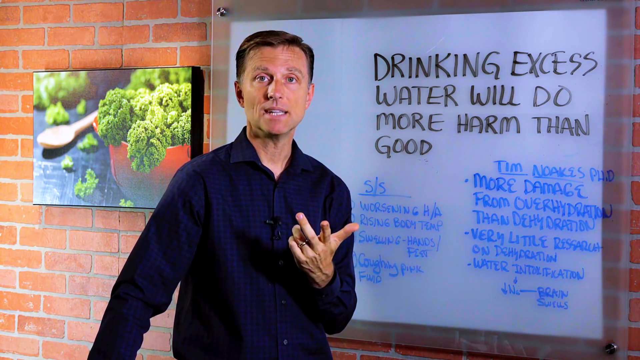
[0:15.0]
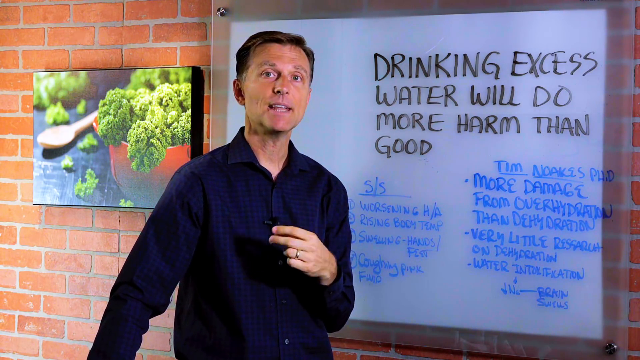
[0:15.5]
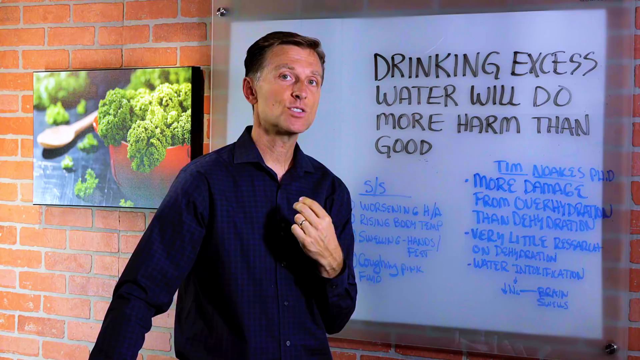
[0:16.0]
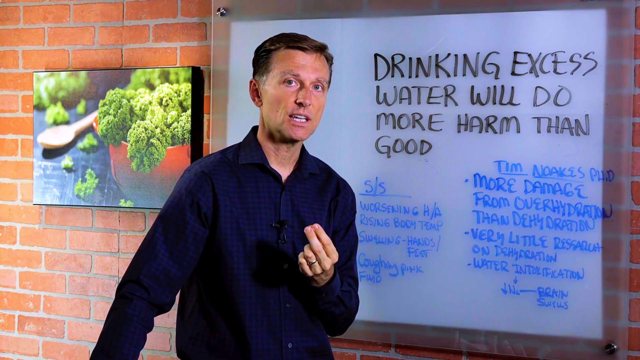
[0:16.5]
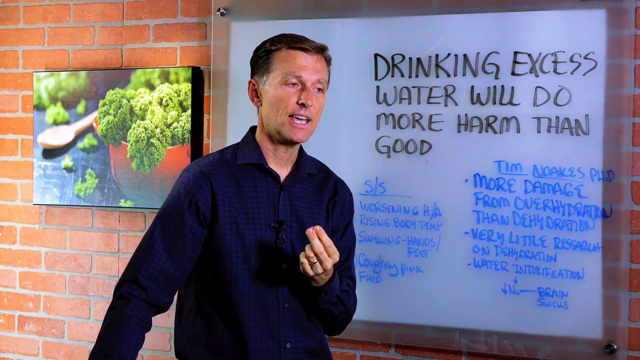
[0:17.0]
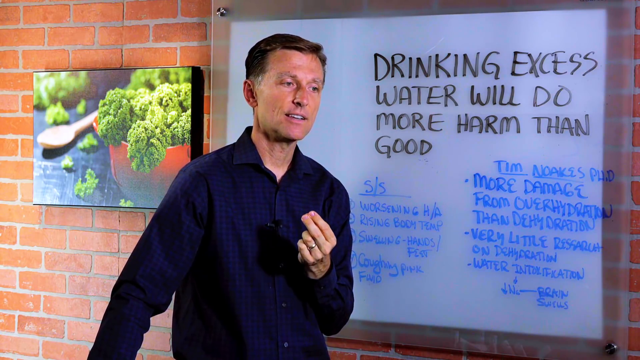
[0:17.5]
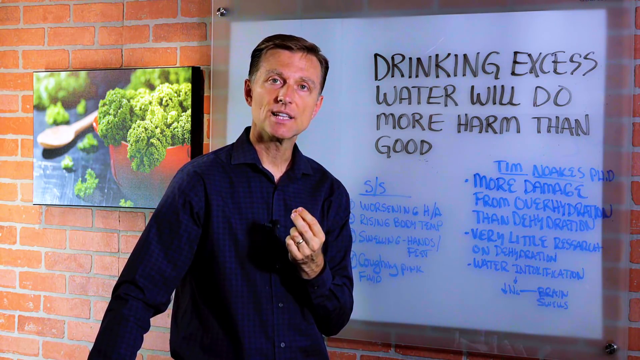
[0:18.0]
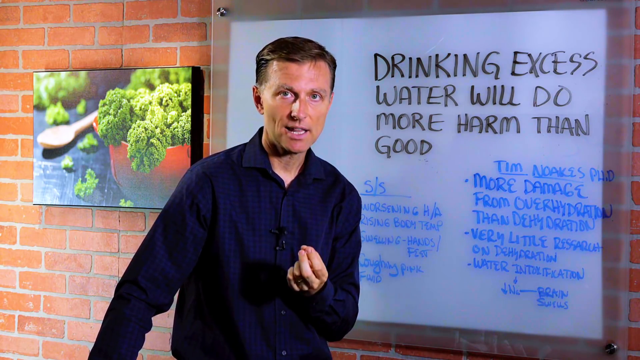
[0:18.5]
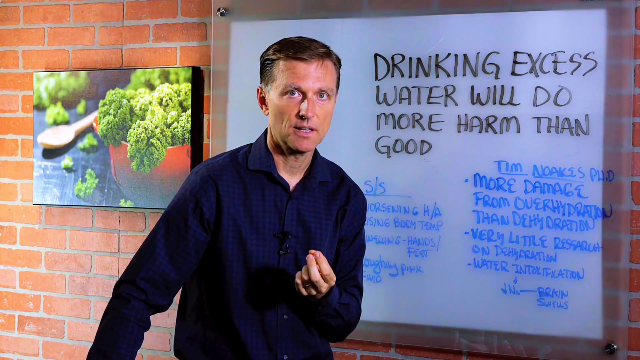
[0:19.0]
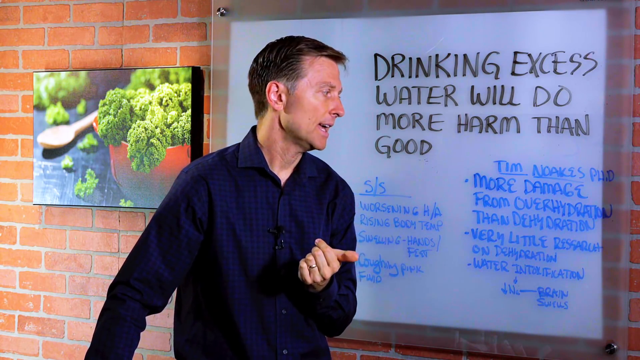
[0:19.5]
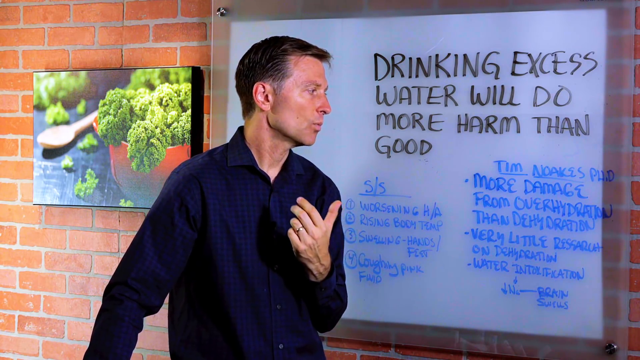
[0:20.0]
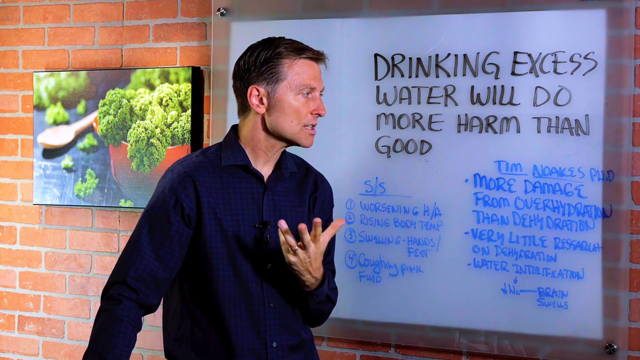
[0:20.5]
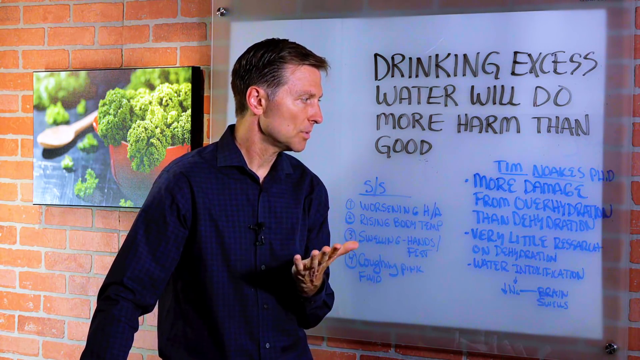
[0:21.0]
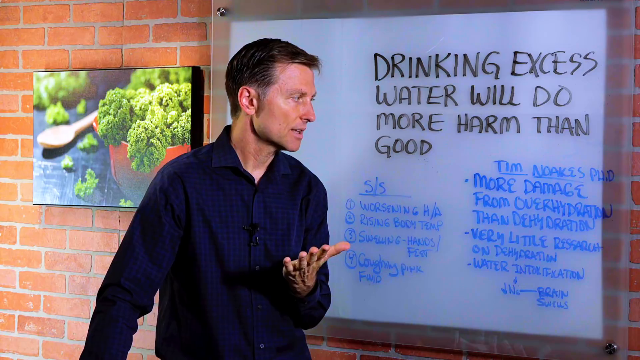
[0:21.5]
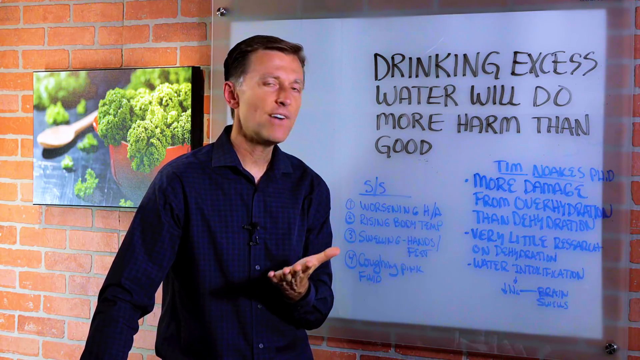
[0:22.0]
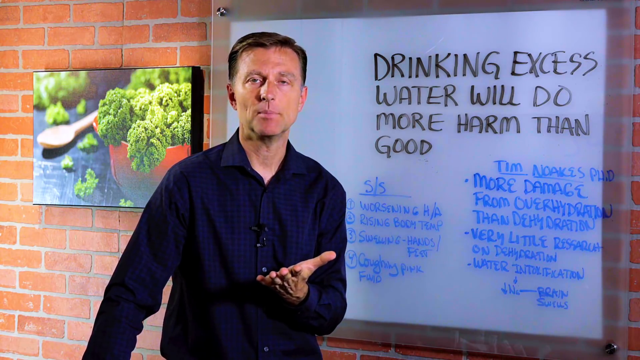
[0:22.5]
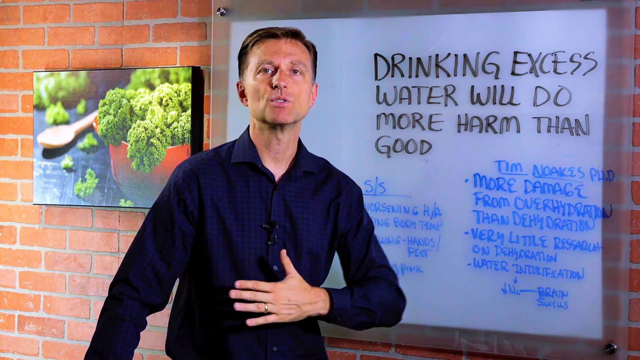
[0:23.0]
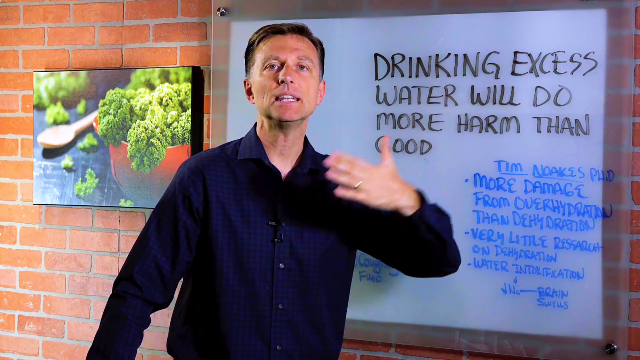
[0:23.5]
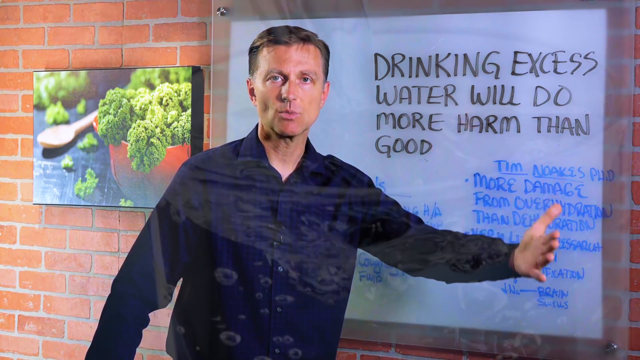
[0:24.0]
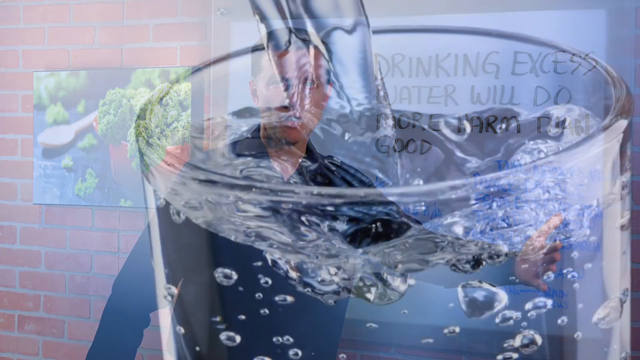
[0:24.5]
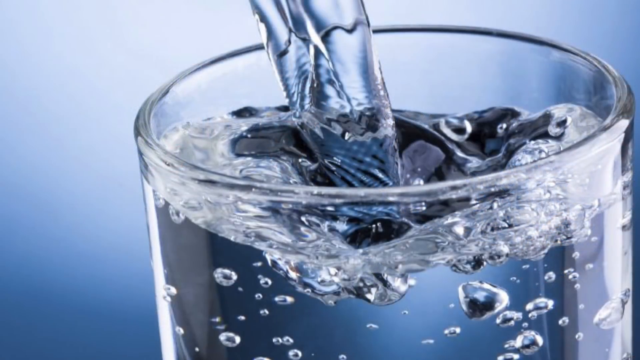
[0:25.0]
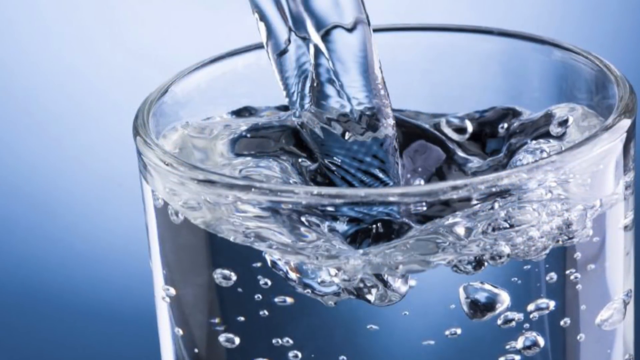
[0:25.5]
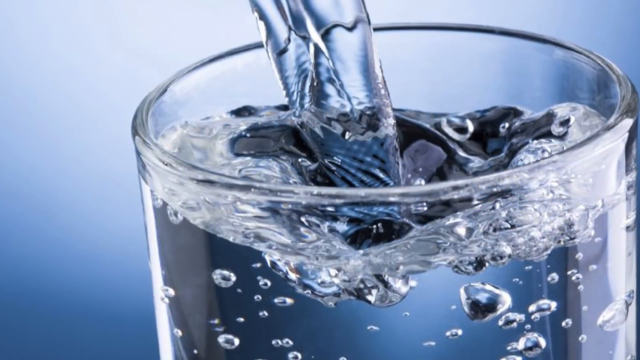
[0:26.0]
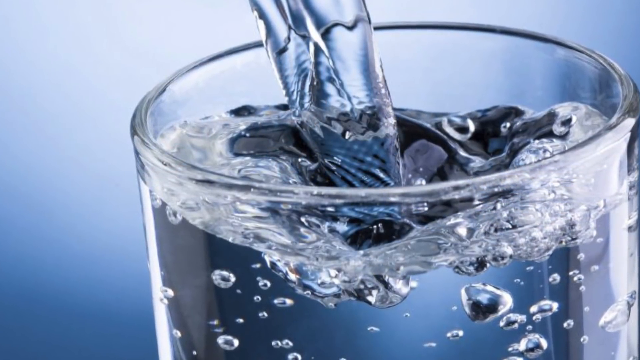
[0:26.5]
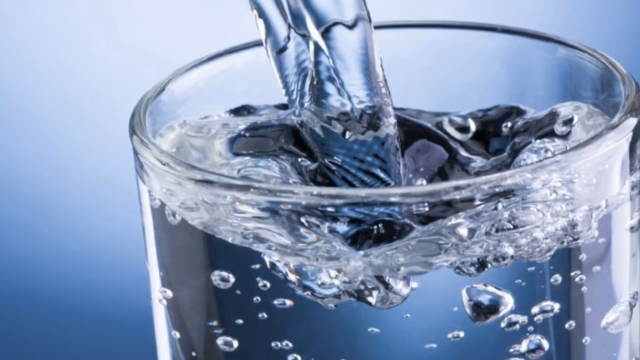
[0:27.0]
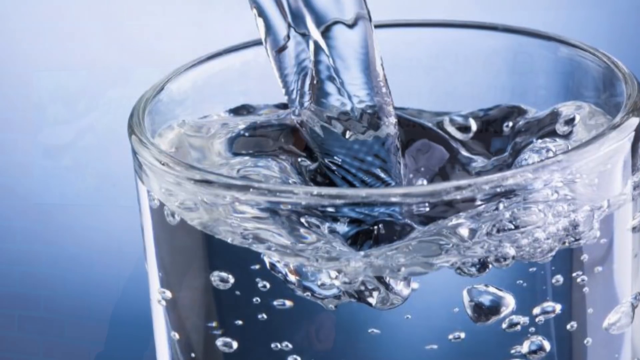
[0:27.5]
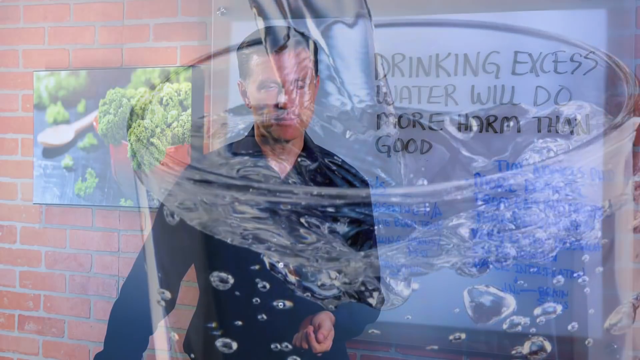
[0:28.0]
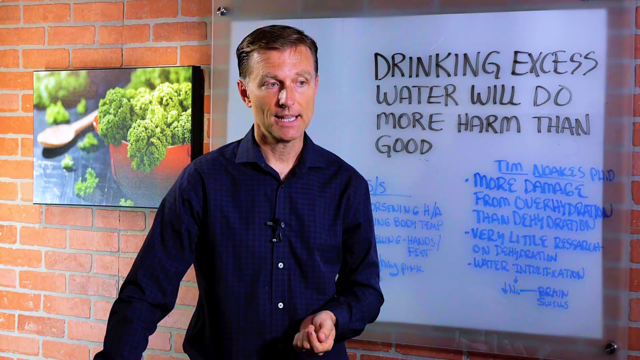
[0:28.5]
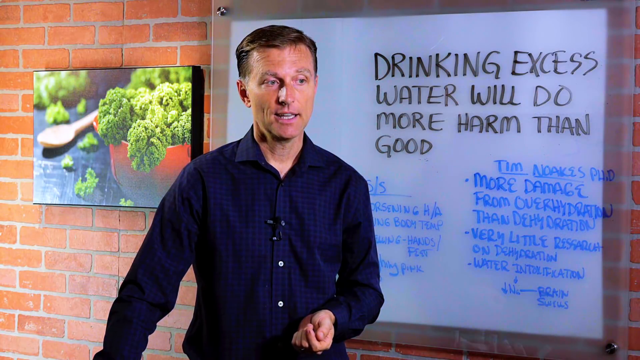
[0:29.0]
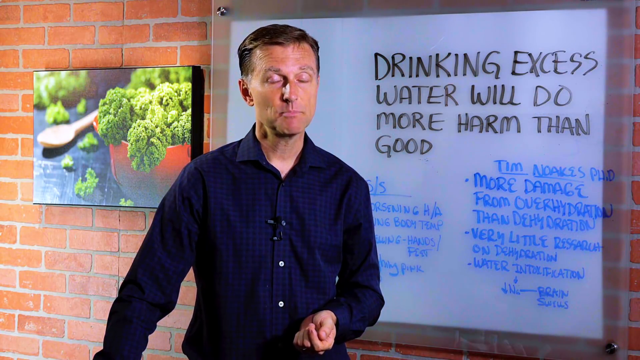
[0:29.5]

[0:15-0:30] The man stands in front of the whiteboard. At the top, in black, it says "drinking excess water will do more harm than good." Below, on the left, is a numbered list of four items labeled "S/S": "worsening H/A," "rising body temp," "swelling hands, feet," and "coughing pink fluid." The right column next to it is a bullet-point list labeled "Tim Noakes Ph.D.": "more damage from overhydration than dehydration," "very little ressarut and dehydration," and "water intoxication." A downward arrow points to the word "NO," followed by a dash and "brain swells." As the man uses his hands while talking, the video switches to what looks to be a still, zoomed-in shot of the top of a clear glass of water with a little condensation and bubbles in the glass.